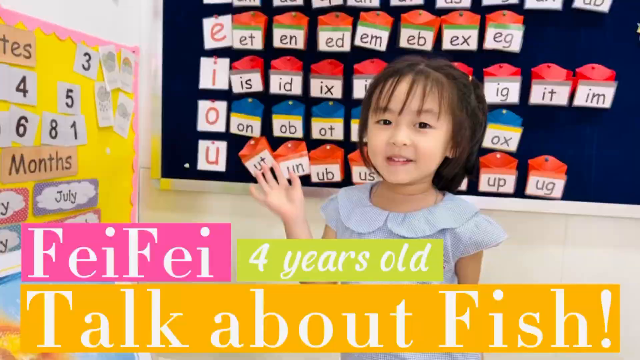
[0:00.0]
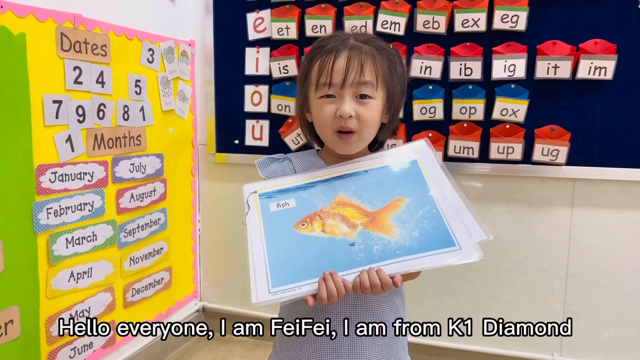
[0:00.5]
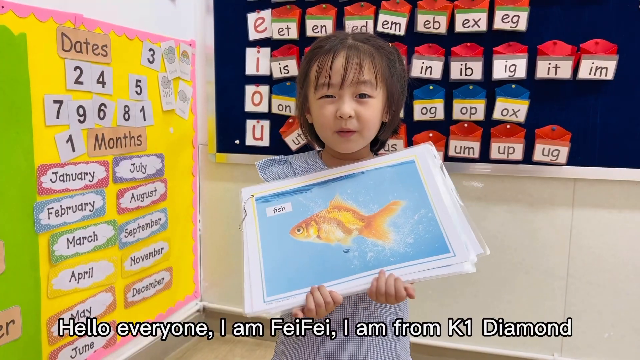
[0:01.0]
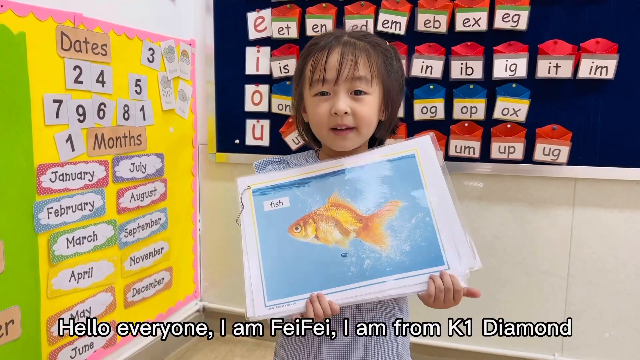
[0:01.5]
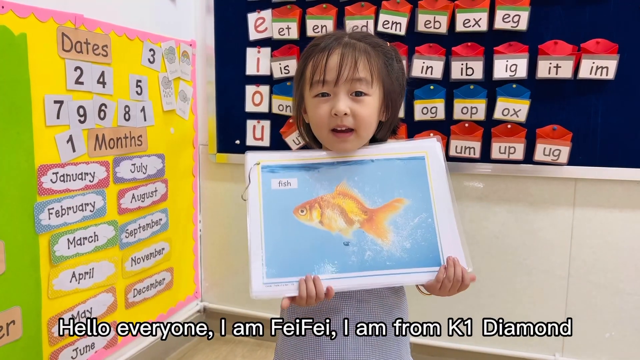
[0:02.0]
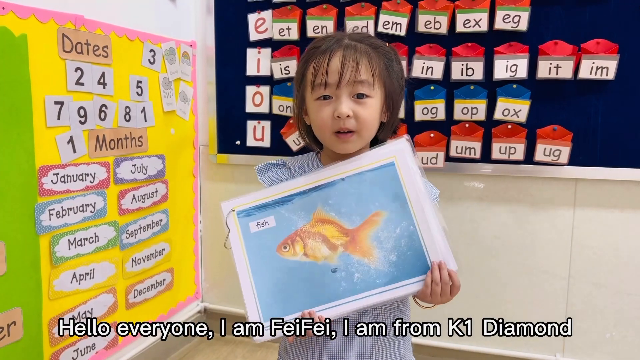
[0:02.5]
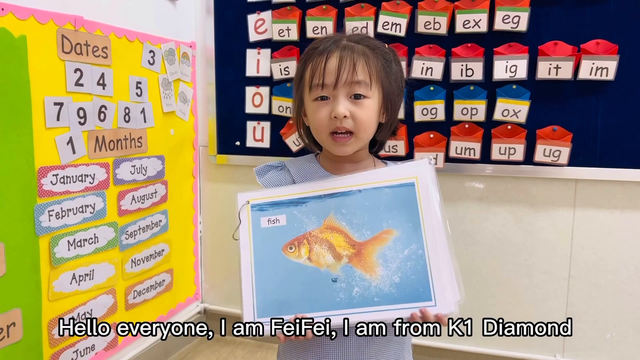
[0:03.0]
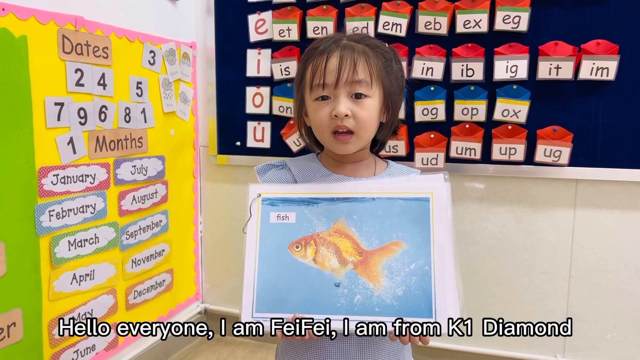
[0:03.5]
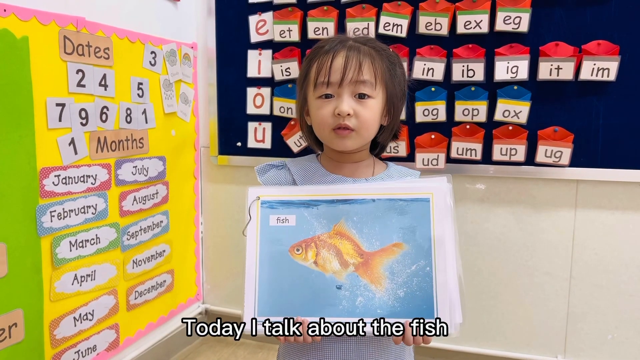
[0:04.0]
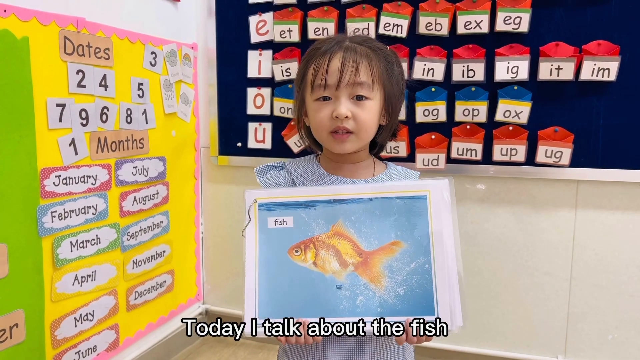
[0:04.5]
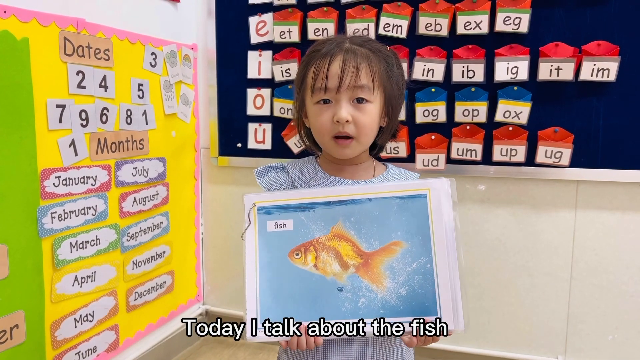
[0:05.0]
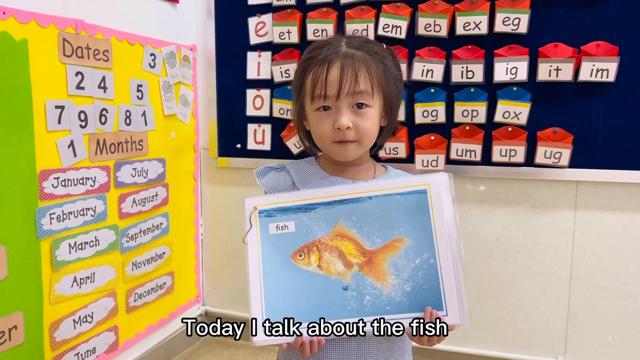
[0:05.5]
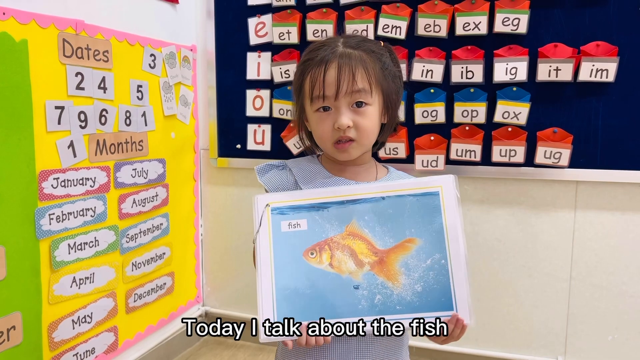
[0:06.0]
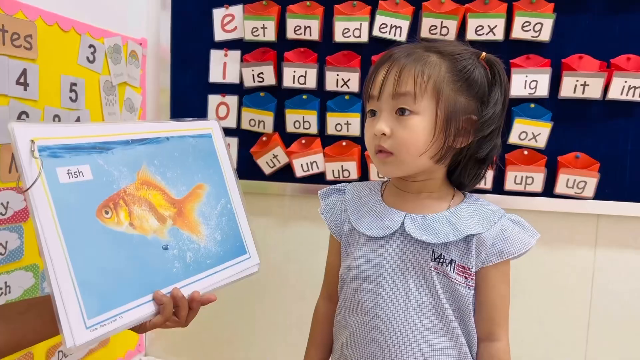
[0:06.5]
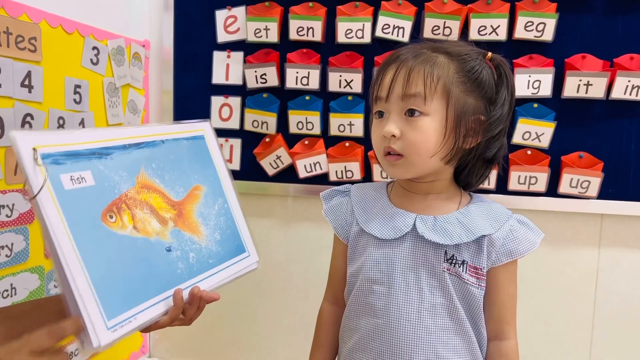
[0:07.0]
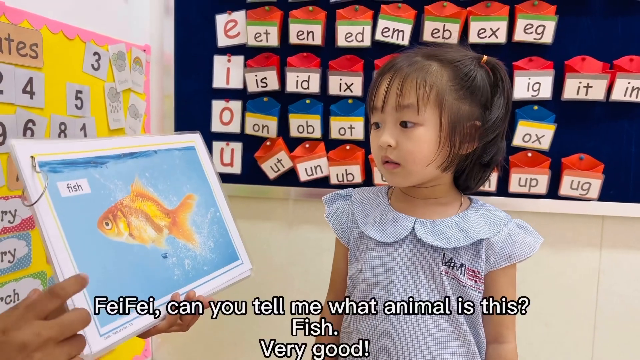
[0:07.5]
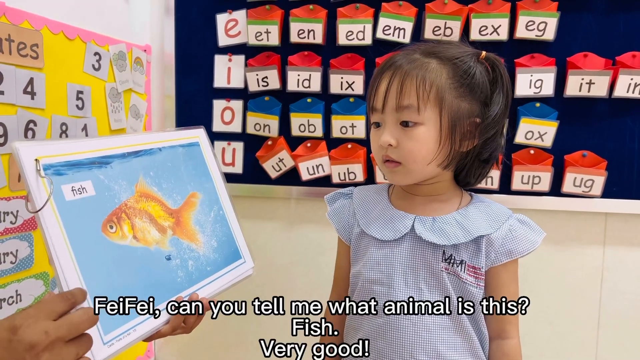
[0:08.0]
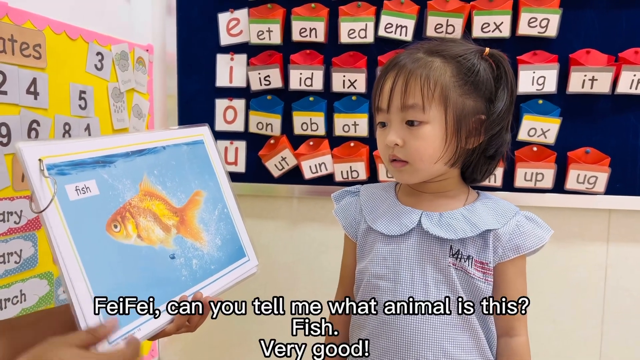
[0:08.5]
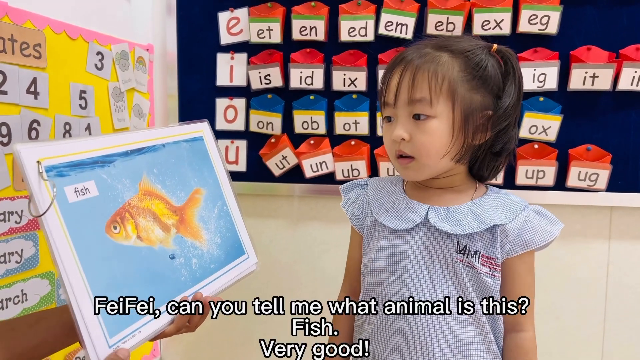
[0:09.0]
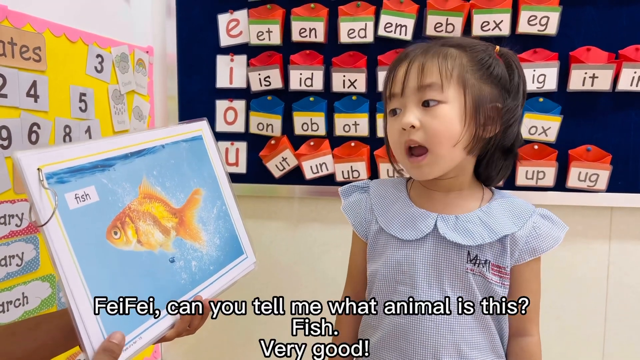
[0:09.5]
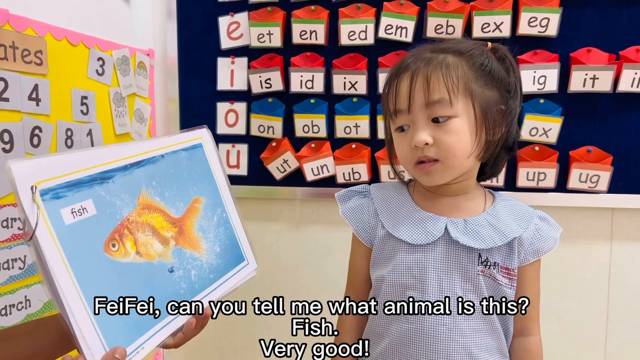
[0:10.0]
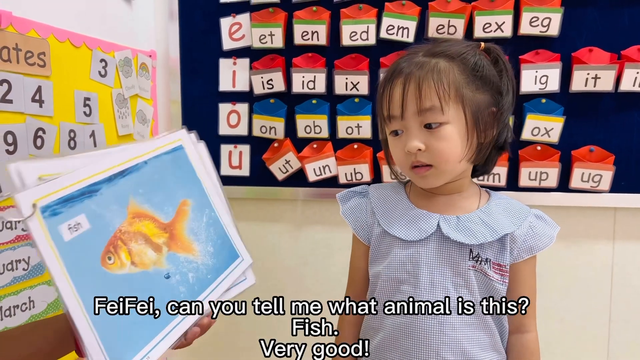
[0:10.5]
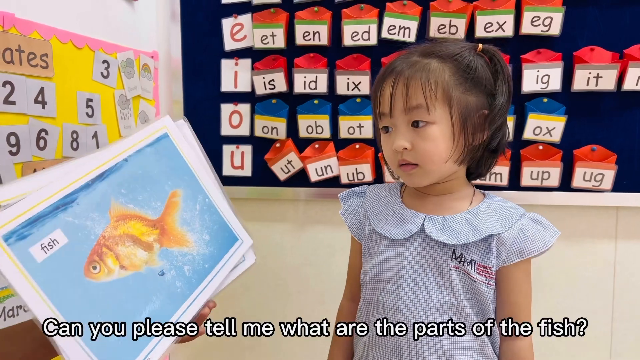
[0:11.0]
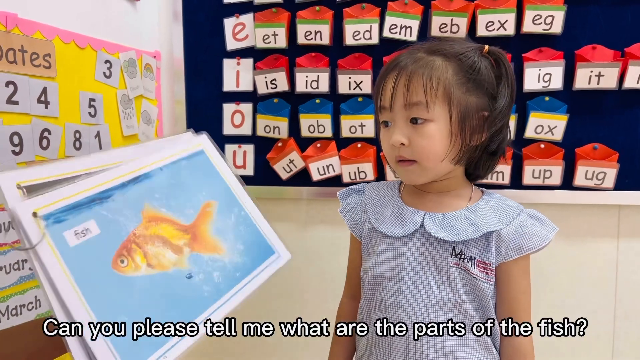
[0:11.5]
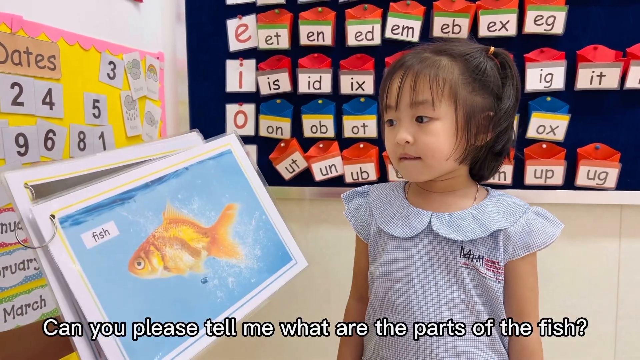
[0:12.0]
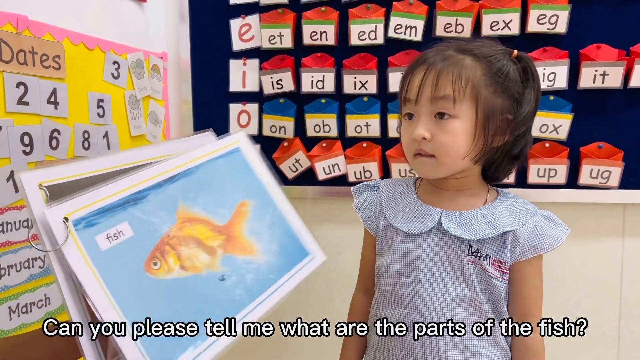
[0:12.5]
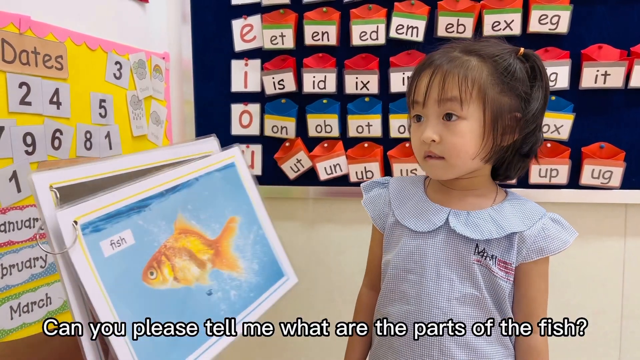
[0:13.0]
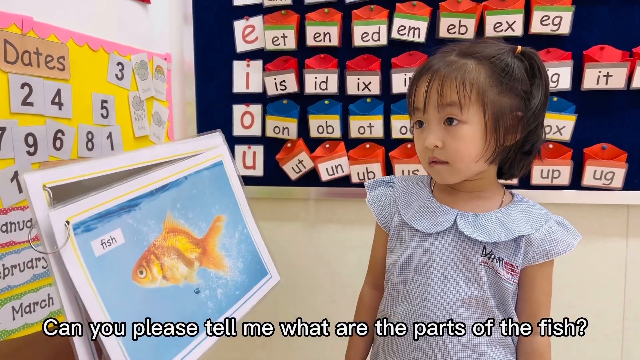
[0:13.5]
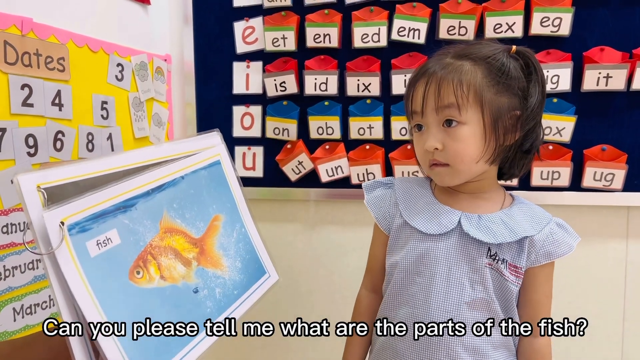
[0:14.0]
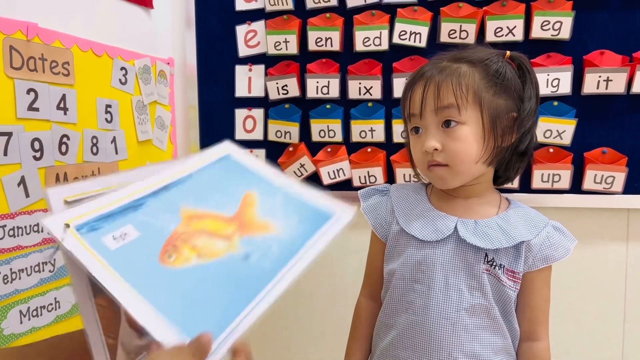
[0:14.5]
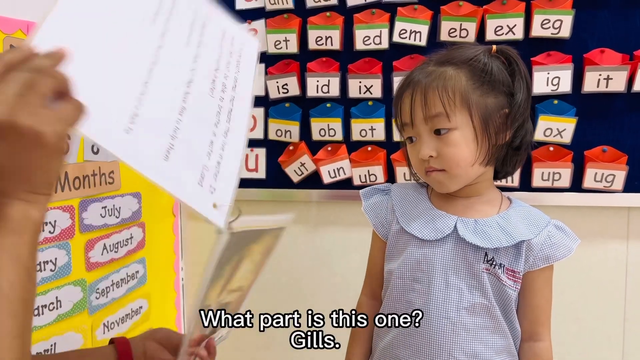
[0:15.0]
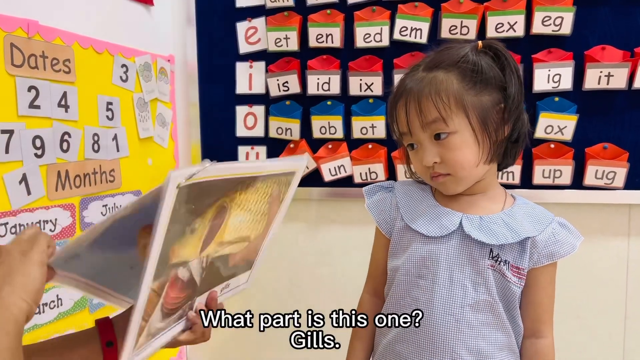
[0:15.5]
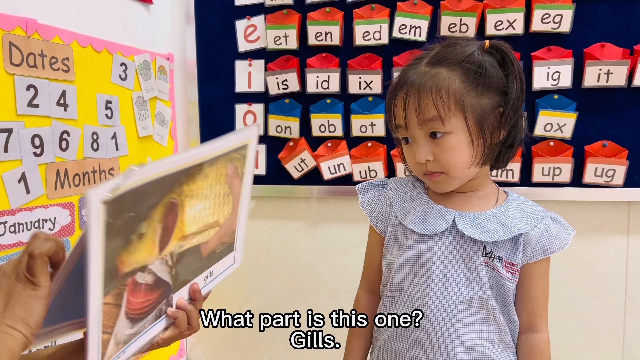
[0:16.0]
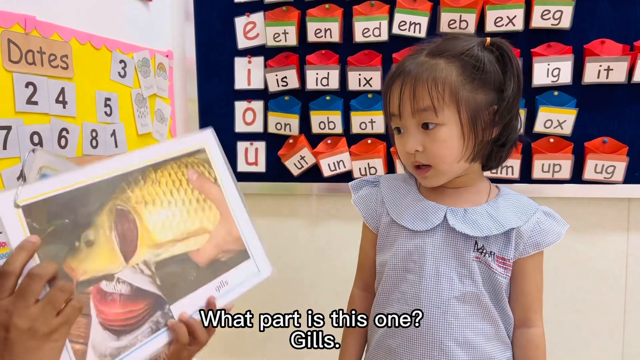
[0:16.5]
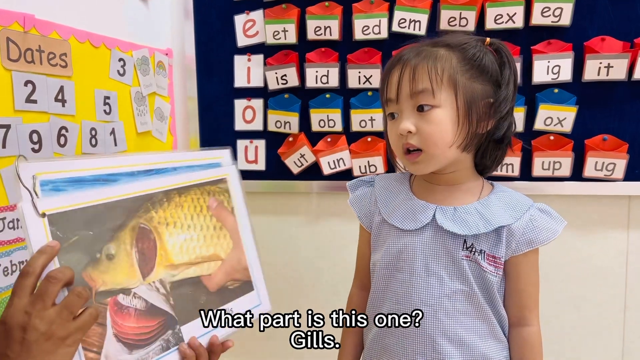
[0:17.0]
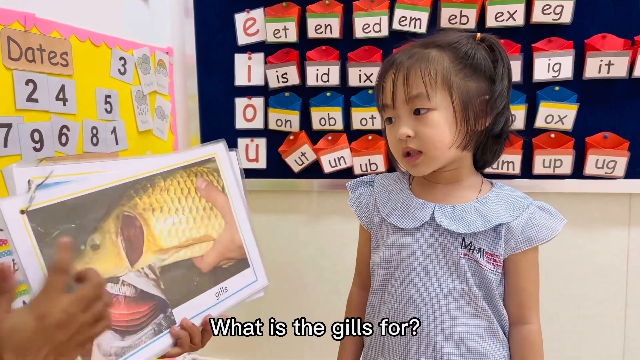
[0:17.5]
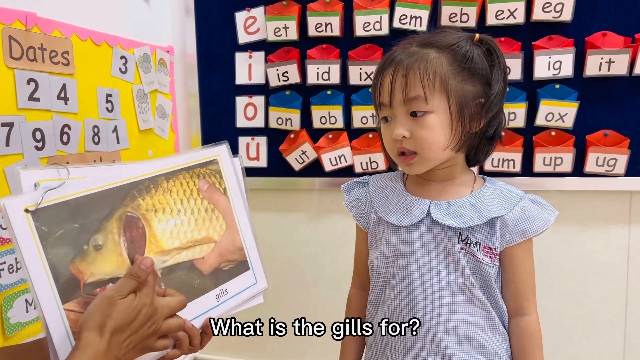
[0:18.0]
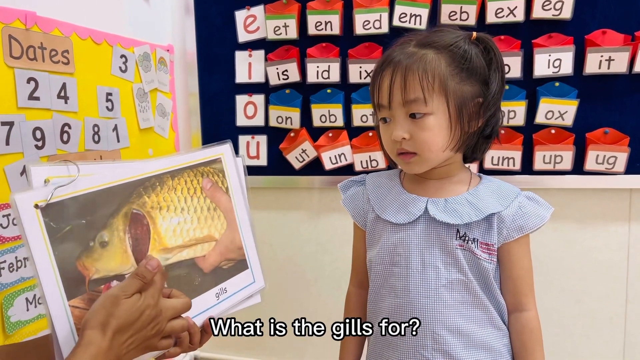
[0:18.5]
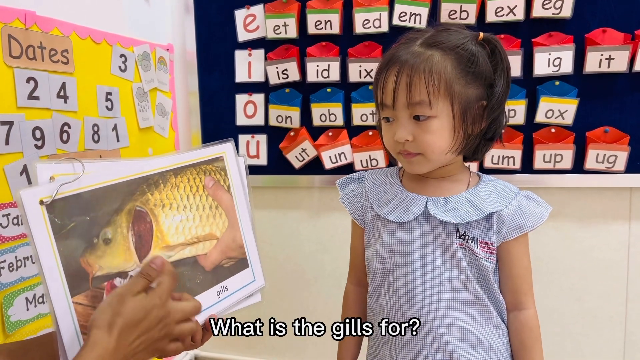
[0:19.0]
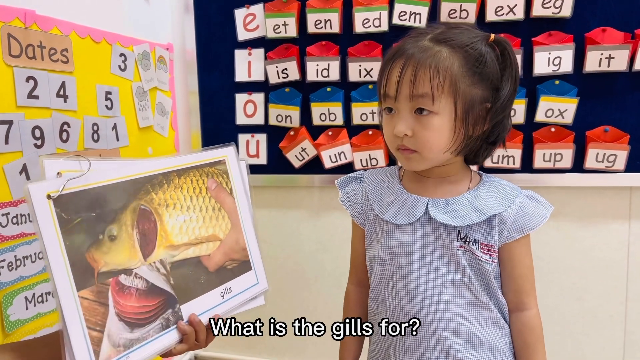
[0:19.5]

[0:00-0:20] A four-year-old schoolgirl, Fifi, is asked by her teacher to talk about fish. The teacher holds up signs, really pictures with labels on them, and asks Fifi questions about the fish. The teacher asks what the part underneath the fish's eye is and points to it, and Fifi correctly identifies it as the gills. The teacher then asks what fish use them for, and Fifi correctly answers that they are used to breathe. Fifi looks very happy and a little nervous. Behind her are letters in English, suggesting this is an English classroom. Another board shows the months and the dates, also in English. Fifi wears a blue dress, and her hair is very neatly done with bangs. The teacher is never seen except for their hands.